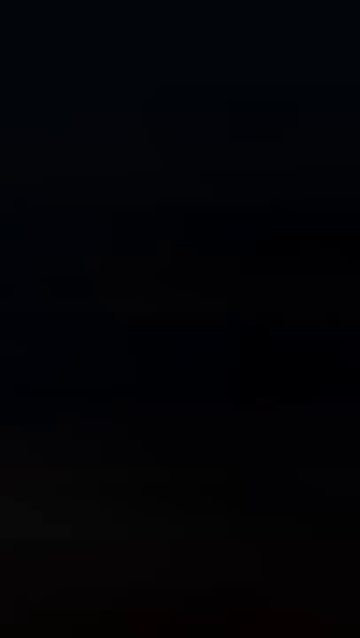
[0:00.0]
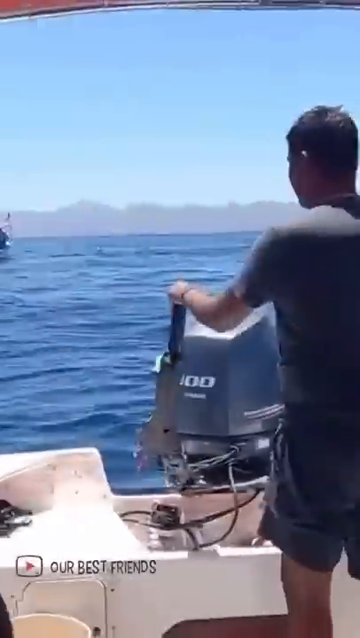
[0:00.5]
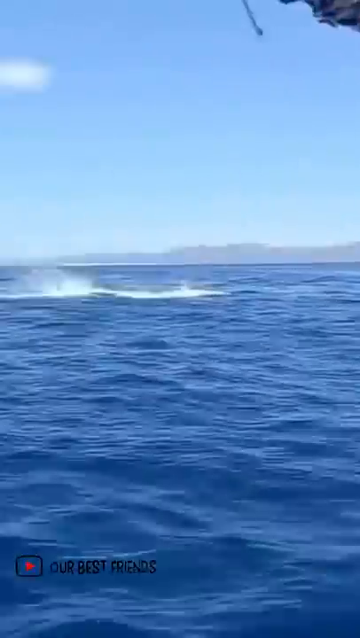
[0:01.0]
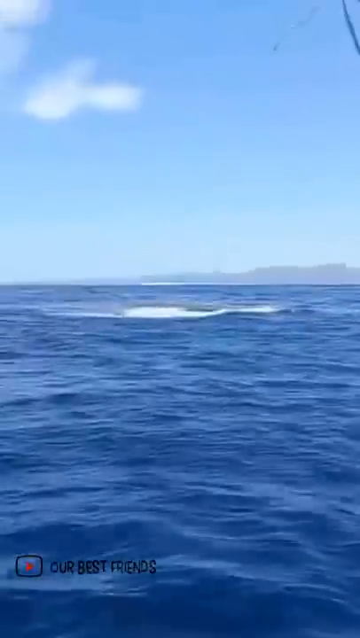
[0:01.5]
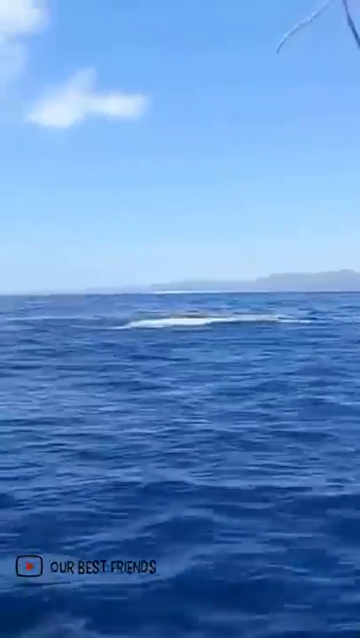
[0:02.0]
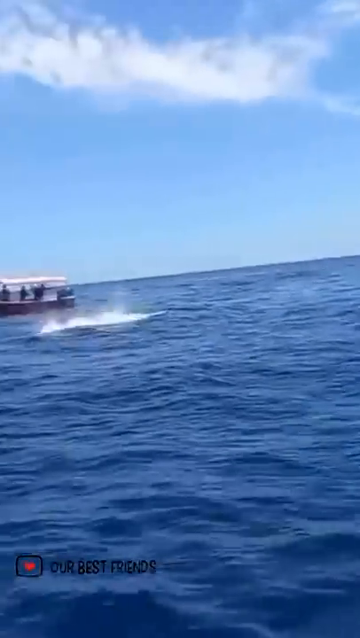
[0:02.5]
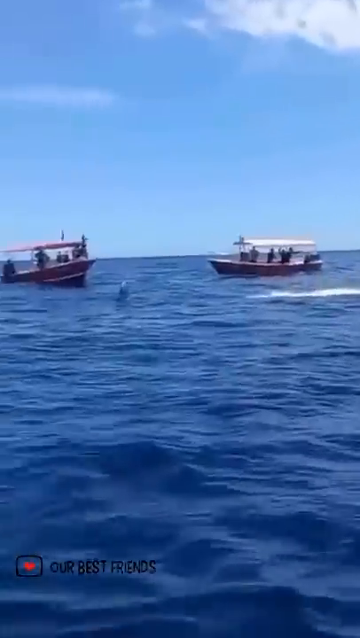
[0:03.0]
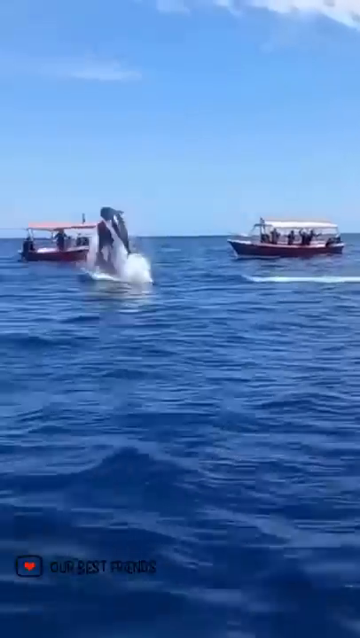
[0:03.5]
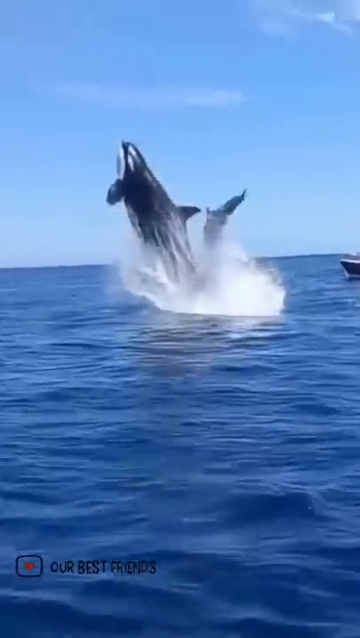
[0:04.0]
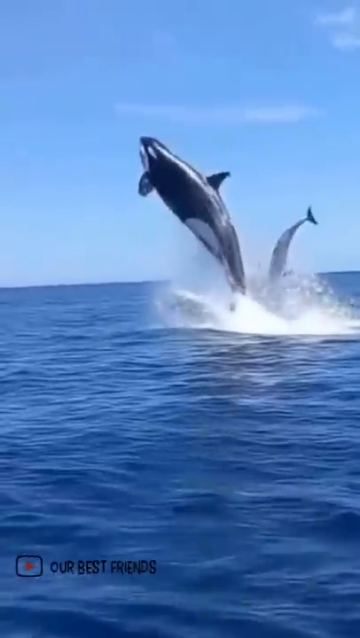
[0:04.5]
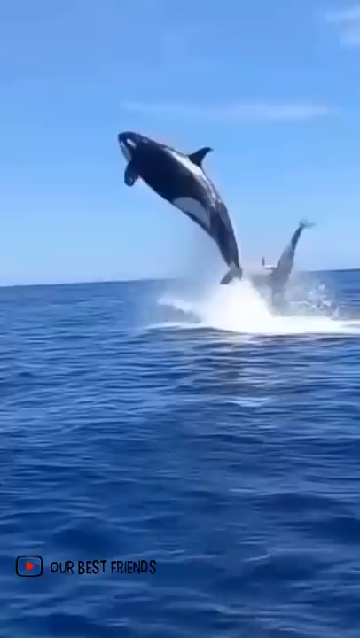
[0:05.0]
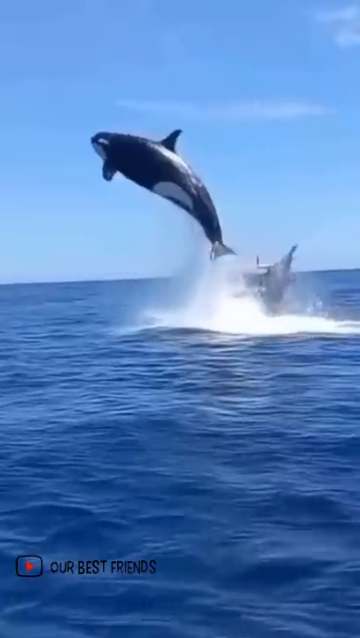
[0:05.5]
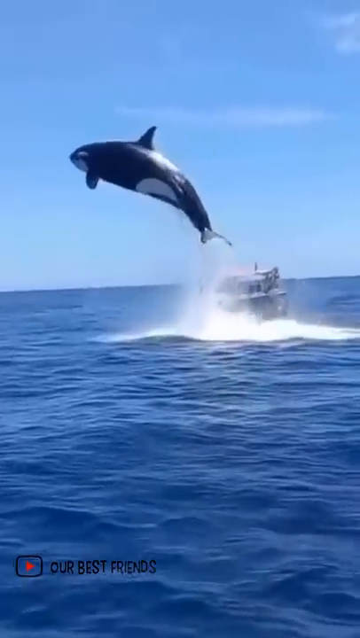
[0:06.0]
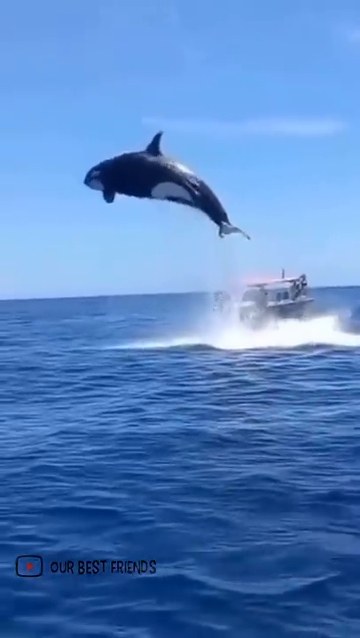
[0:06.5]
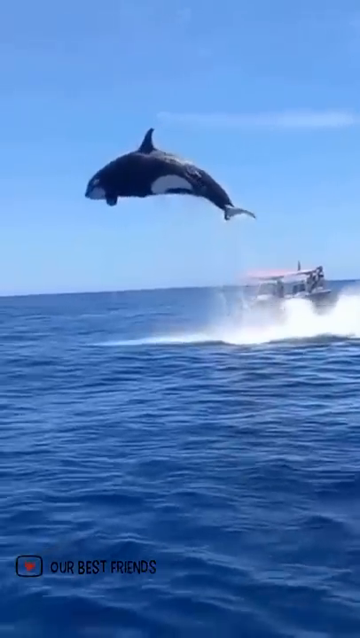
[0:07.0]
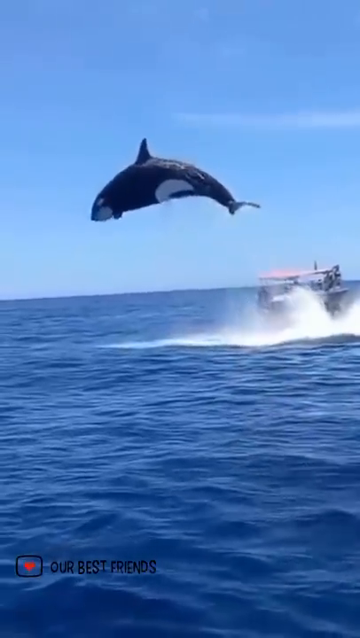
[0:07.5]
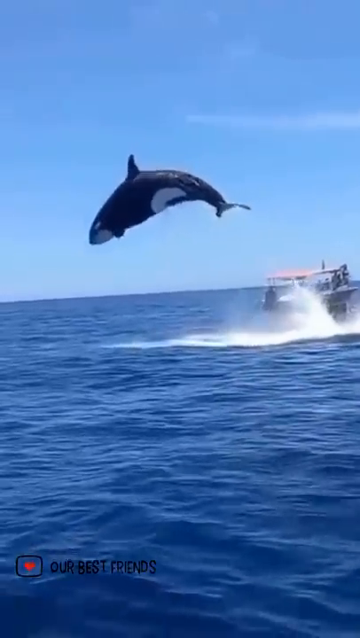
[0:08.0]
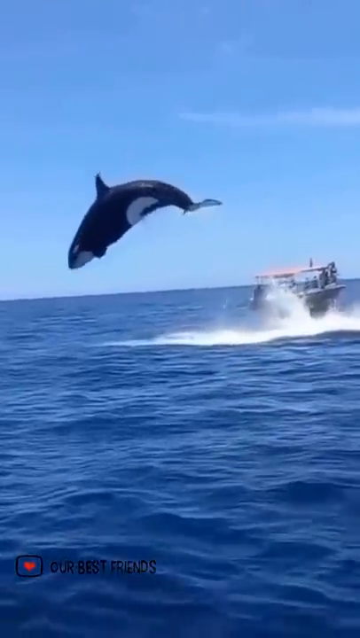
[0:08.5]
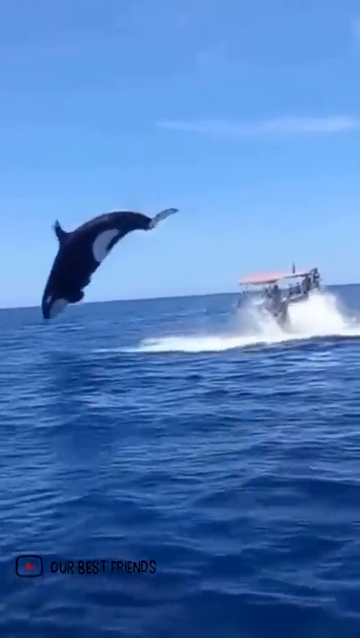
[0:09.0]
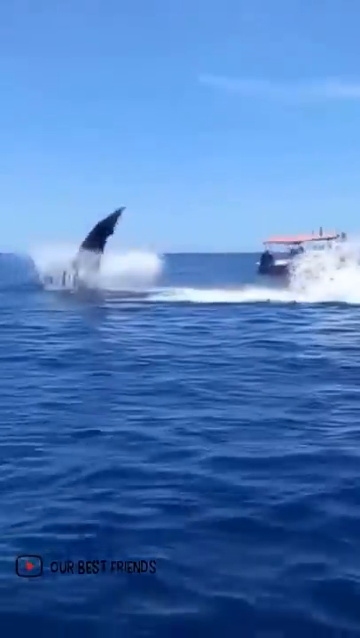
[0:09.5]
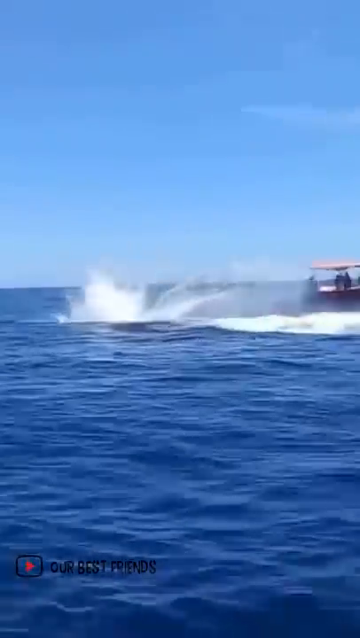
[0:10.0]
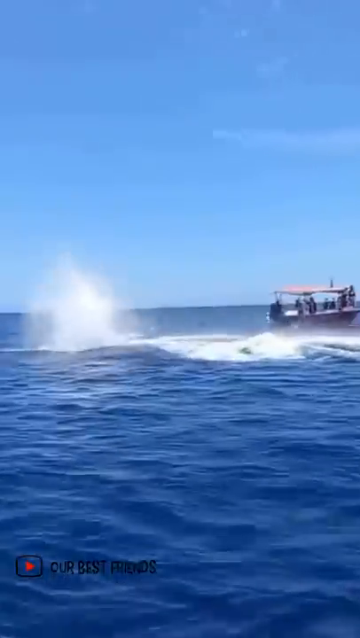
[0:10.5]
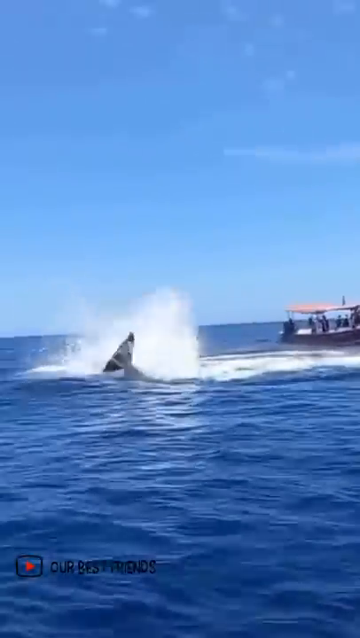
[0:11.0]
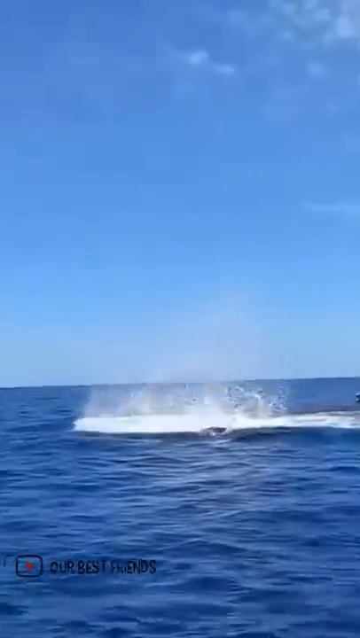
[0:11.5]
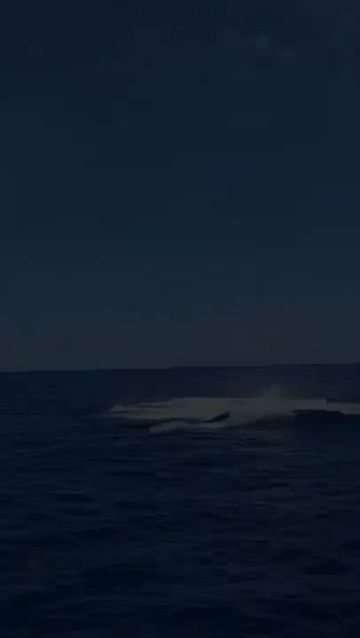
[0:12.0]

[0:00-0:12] A couple of guys are on a boat, seen mostly from behind. They are dressed very casually, apparently in swim trunks and t-shirts. One of them is steering the boat, and he is mainly who is visible at the start. The camera then pans to the left, showing some other boats in the distance, and then two killer whales. One whale's tail pops out, and the video slows down as the other one rises from the water and leaps high into the air, completing its arc and going right back into the water with a big splash. It is a very bright, sunny day.